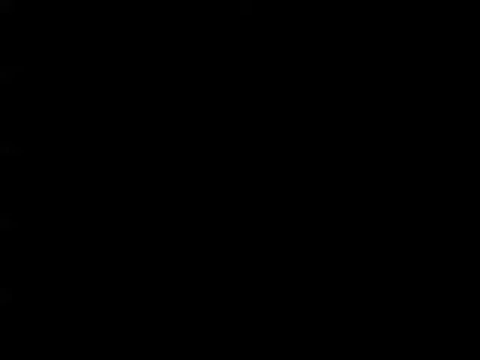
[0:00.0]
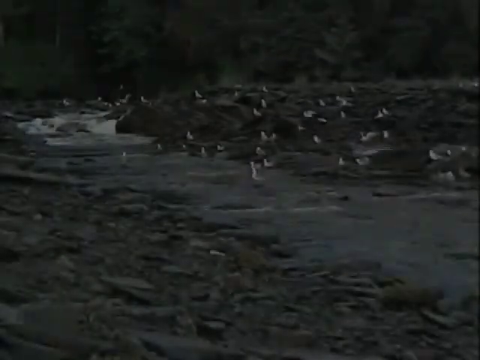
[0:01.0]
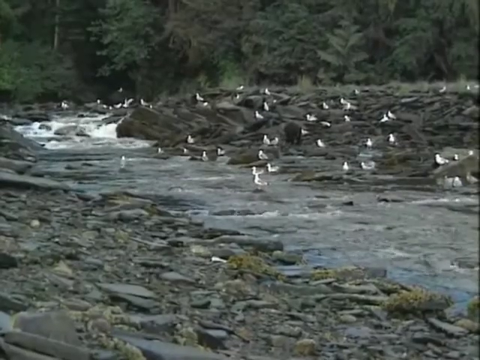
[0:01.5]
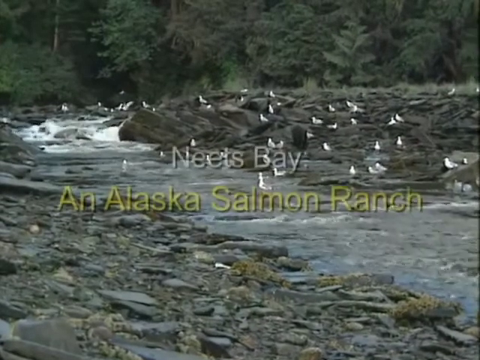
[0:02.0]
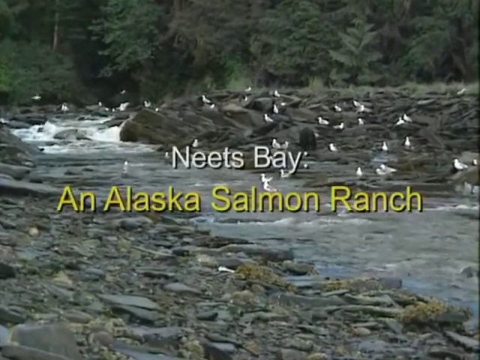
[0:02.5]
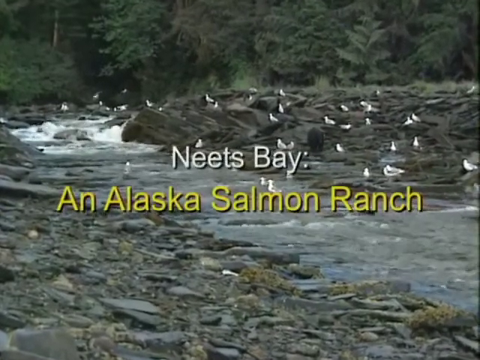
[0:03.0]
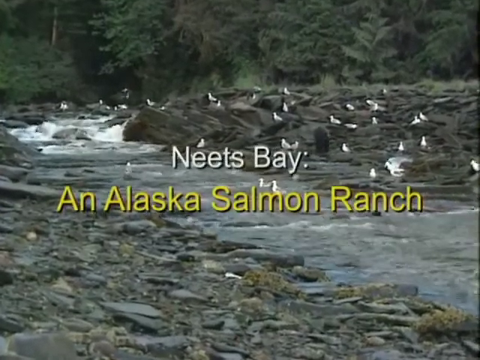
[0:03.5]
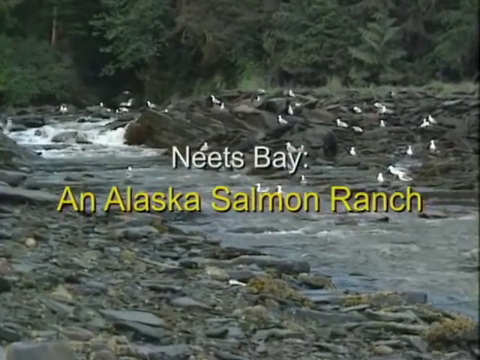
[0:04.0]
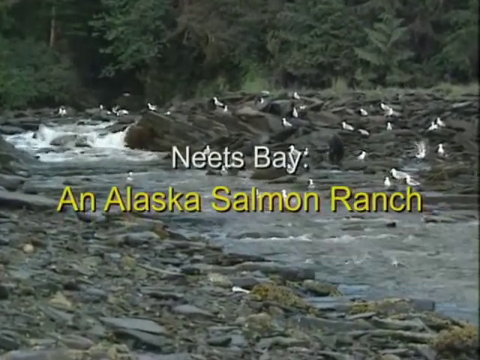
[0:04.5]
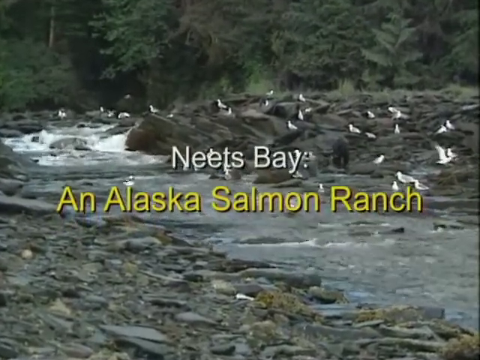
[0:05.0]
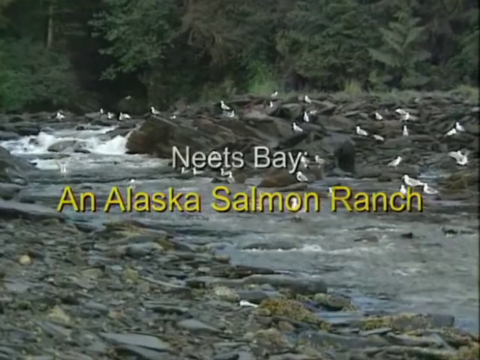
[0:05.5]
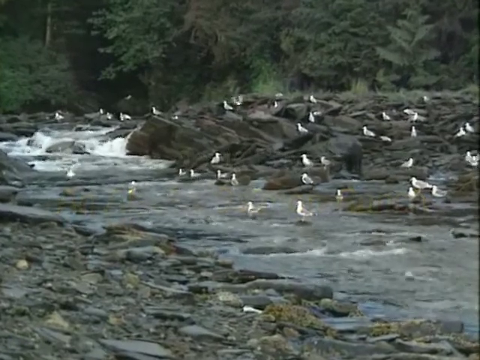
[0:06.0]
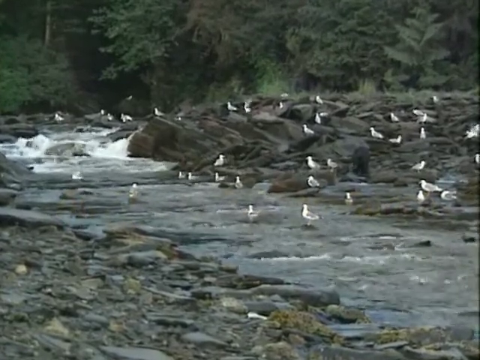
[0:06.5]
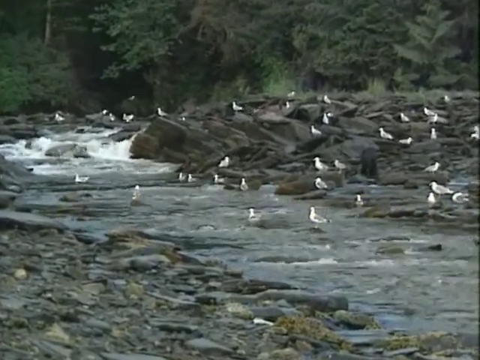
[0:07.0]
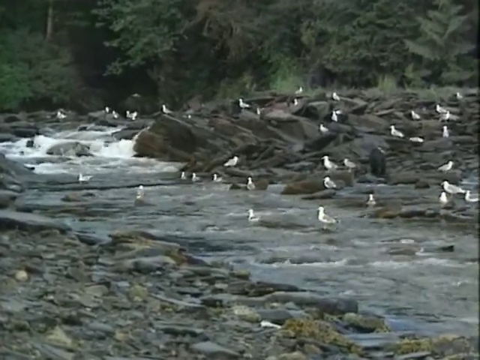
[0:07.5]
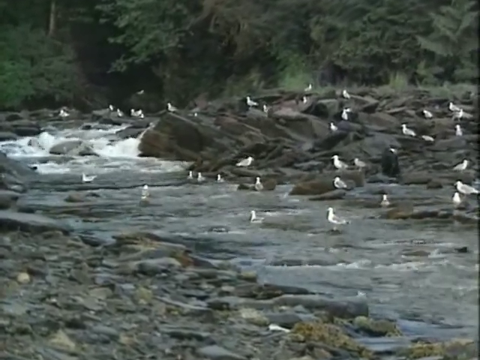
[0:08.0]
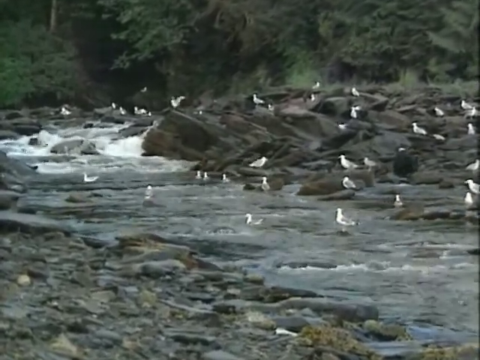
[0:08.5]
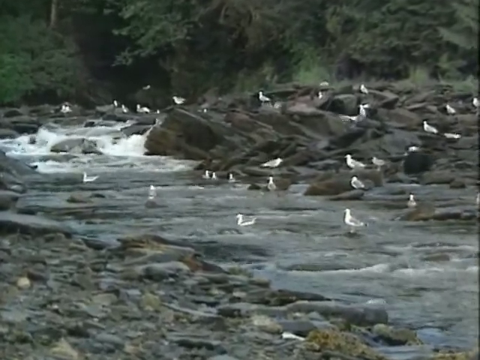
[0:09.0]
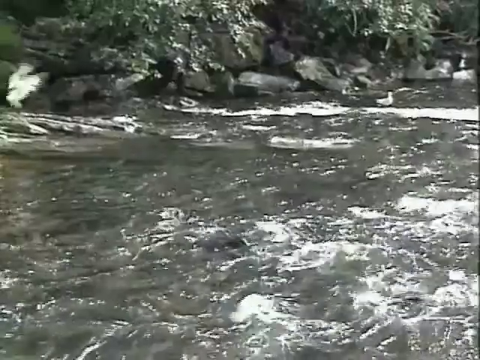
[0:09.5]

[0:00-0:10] A small bubbling river runs through the middle of the shot. Dark black and gray rocks are on the lower left and upper right sides; the rocks on the upper right form a hill, and a group of about 30 or 40 birds sits on them, while the rocks on the lower left are lower to the ground. Green trees are at the top of the shot in the background. The water flows toward the lower right side of the screen. The upper left side of the screen is dark, and the water there is white with suds in it. In the middle of the screen are the words "Neats Bay" and "Alaska Salmon Ranch". The camera zooms in slightly on the water on the upper left side, showing birds sitting on the rocks and some birds floating in the water.